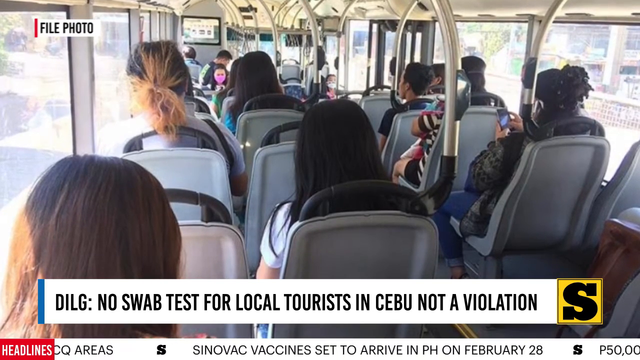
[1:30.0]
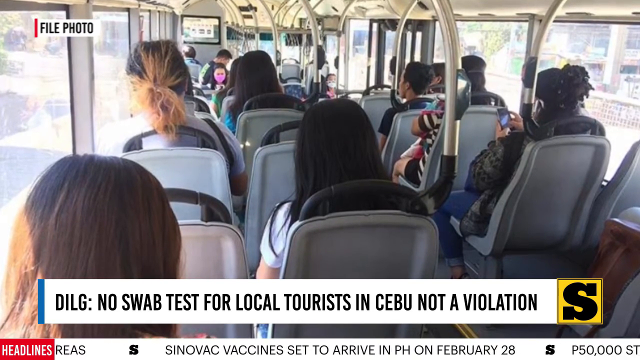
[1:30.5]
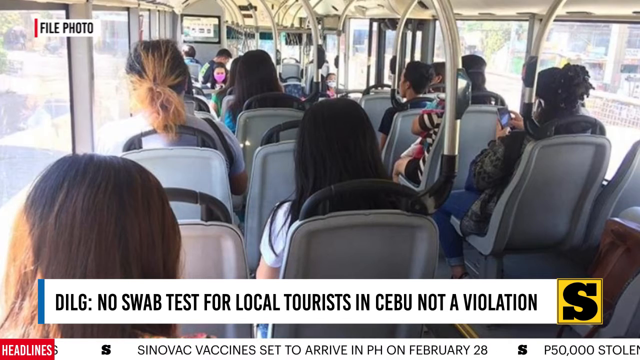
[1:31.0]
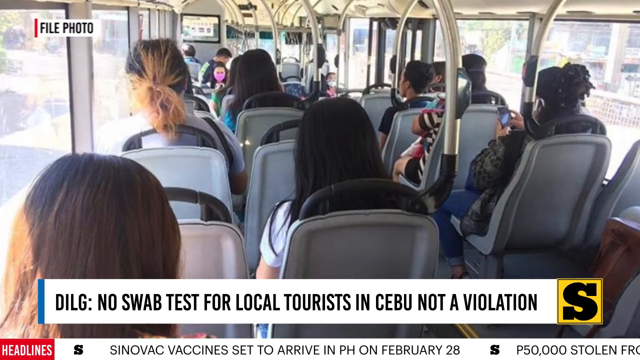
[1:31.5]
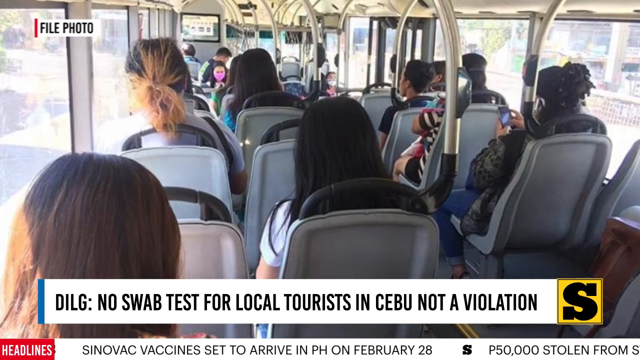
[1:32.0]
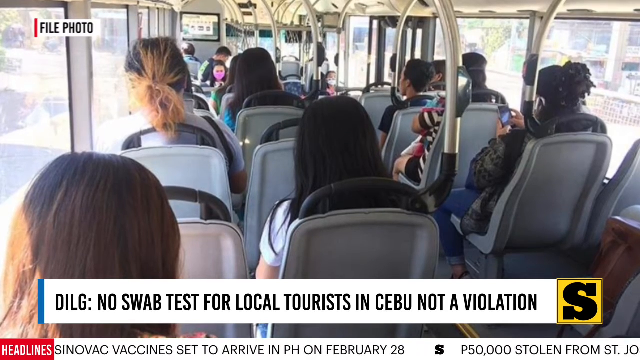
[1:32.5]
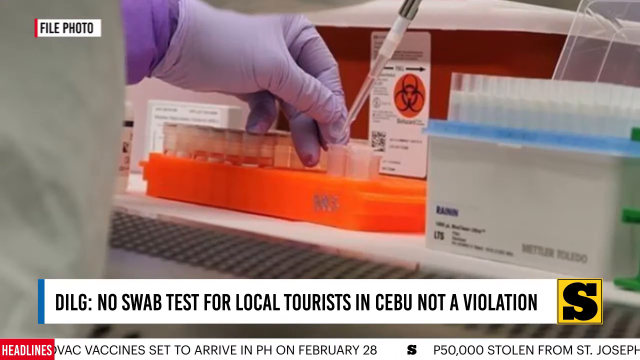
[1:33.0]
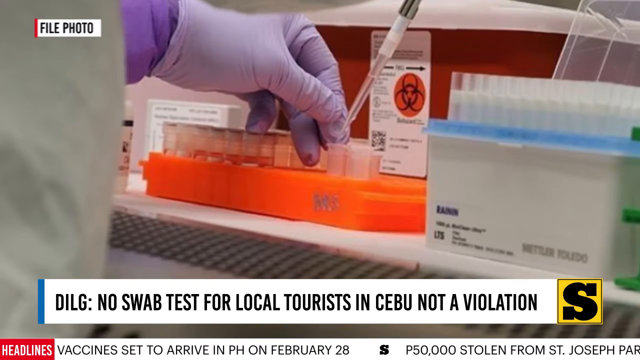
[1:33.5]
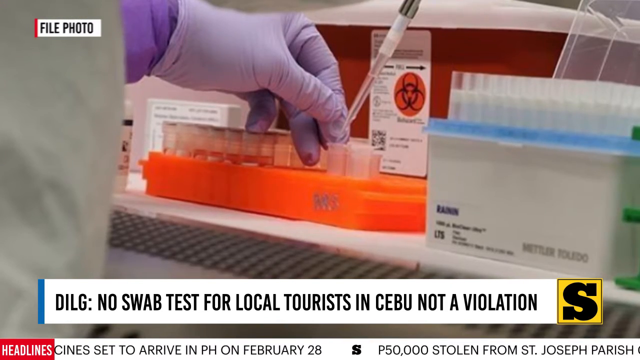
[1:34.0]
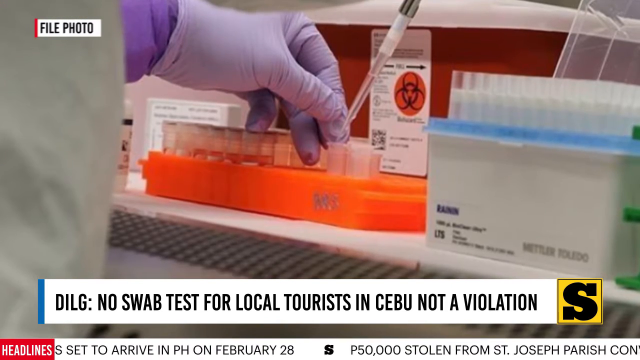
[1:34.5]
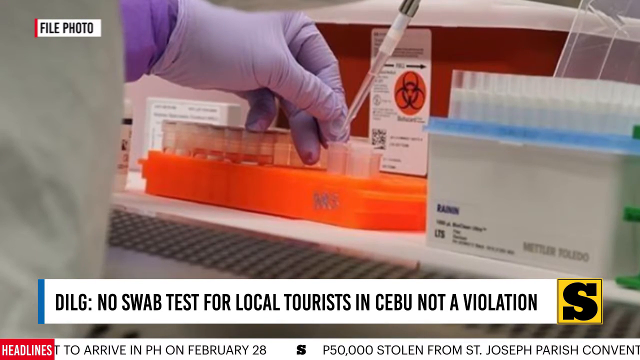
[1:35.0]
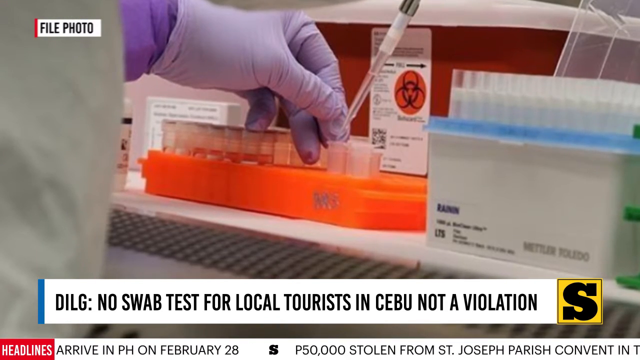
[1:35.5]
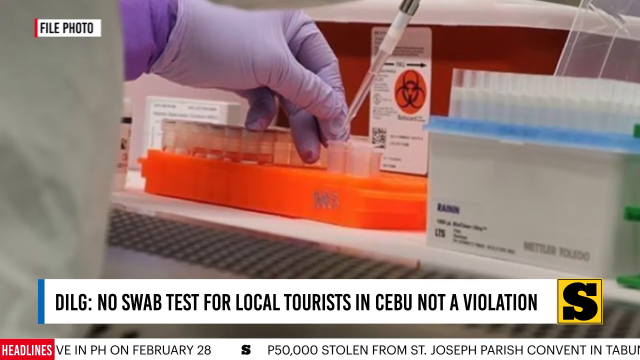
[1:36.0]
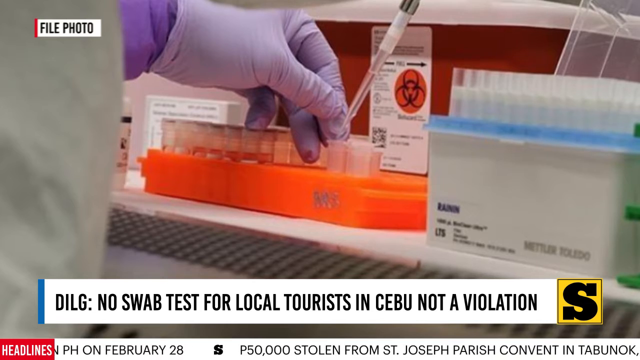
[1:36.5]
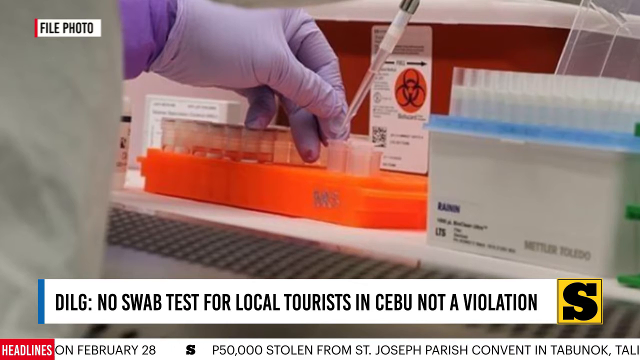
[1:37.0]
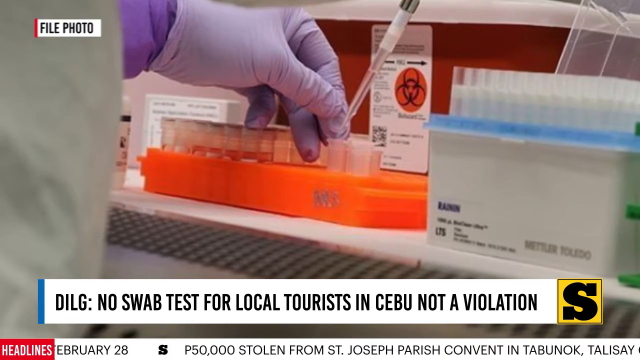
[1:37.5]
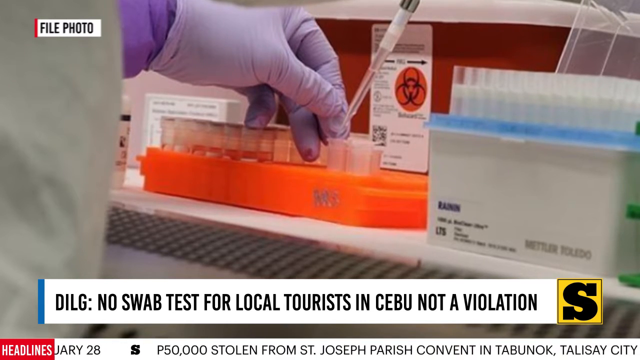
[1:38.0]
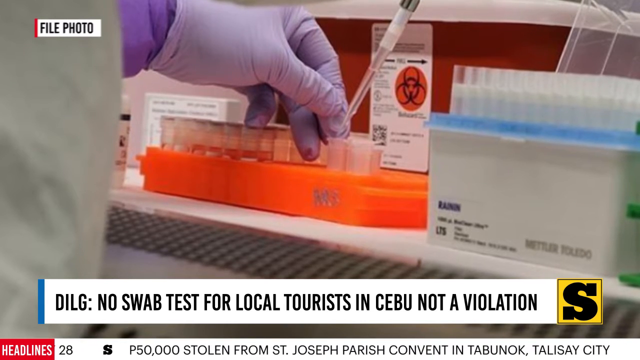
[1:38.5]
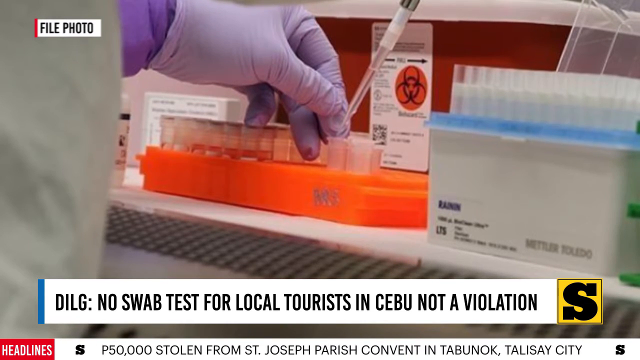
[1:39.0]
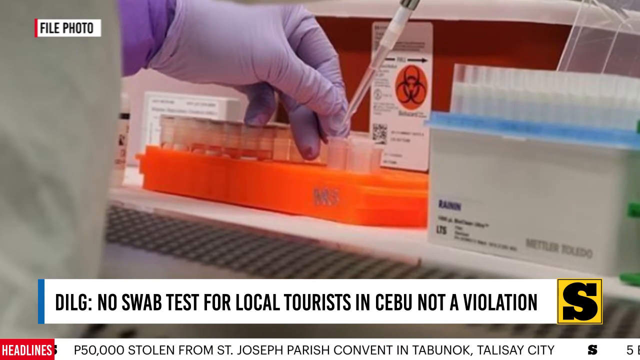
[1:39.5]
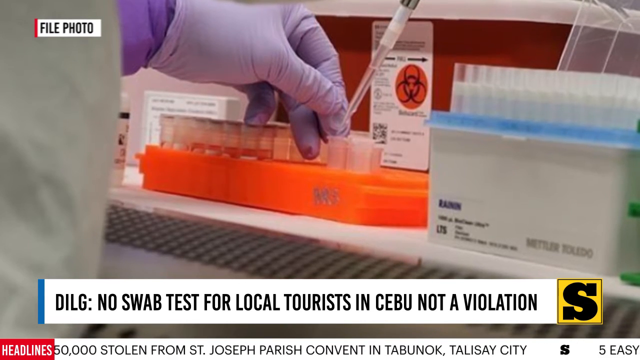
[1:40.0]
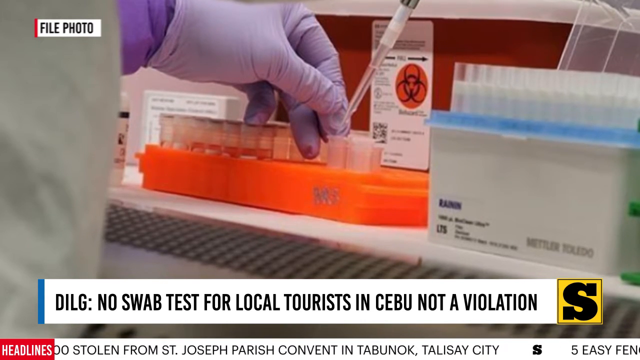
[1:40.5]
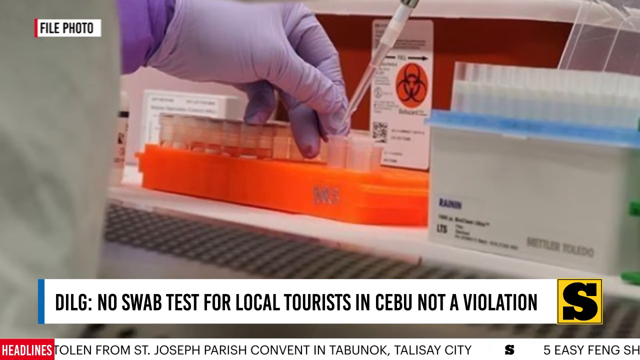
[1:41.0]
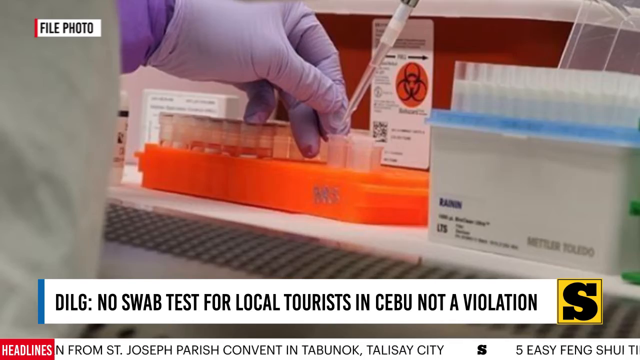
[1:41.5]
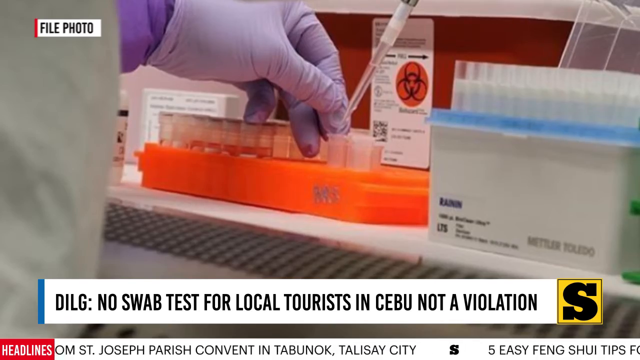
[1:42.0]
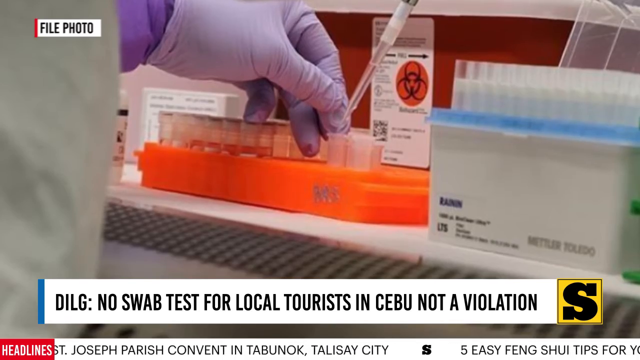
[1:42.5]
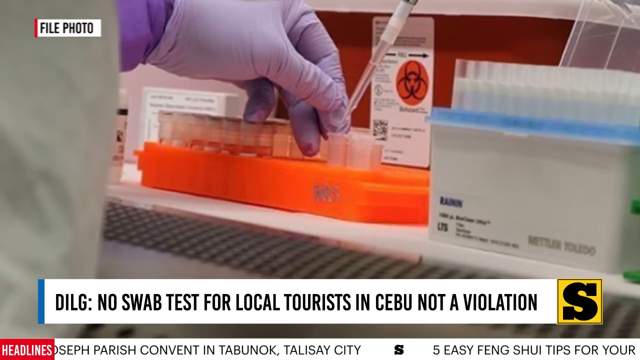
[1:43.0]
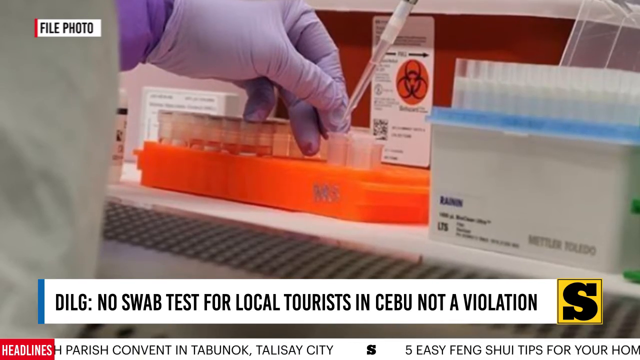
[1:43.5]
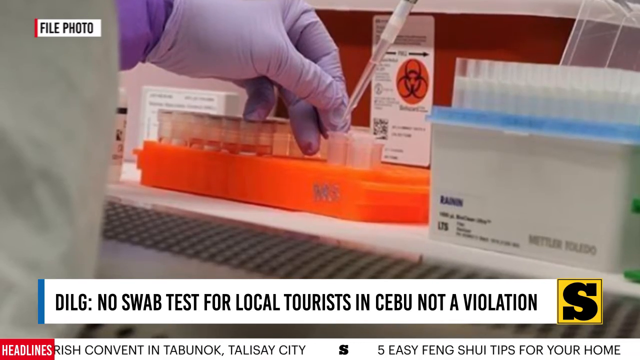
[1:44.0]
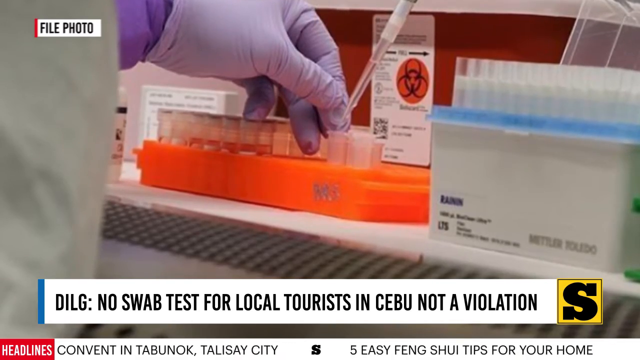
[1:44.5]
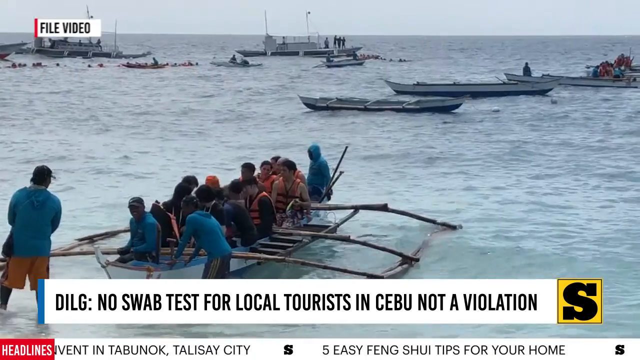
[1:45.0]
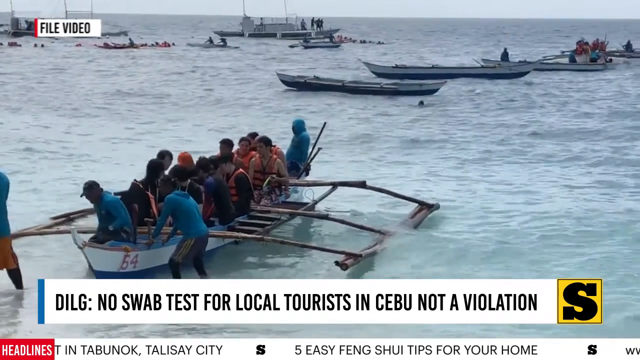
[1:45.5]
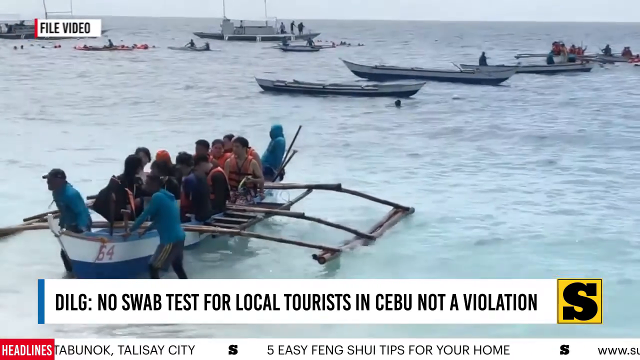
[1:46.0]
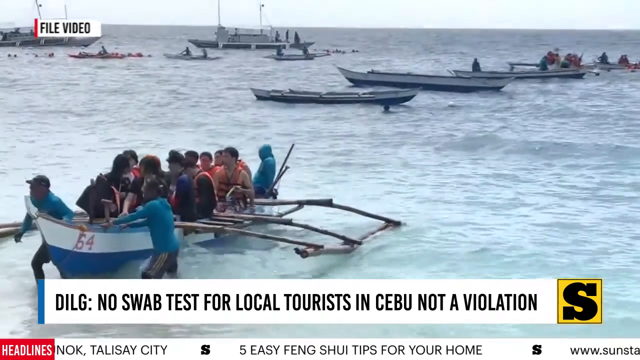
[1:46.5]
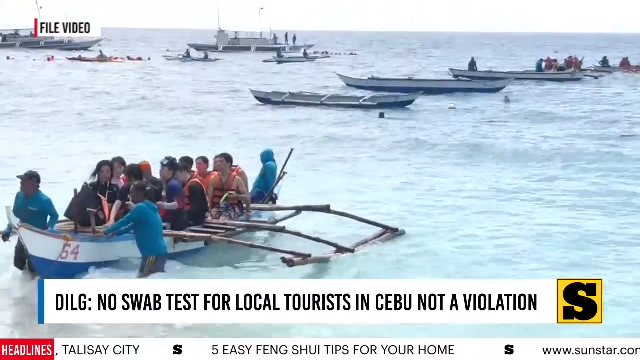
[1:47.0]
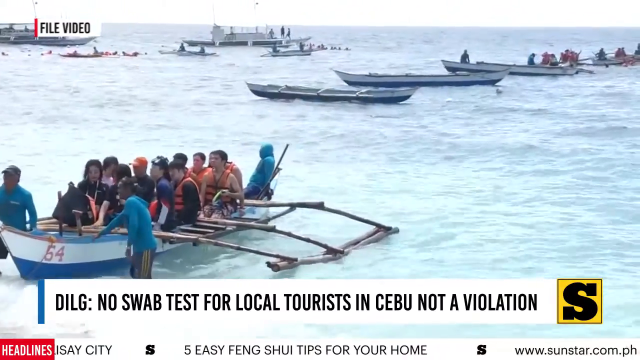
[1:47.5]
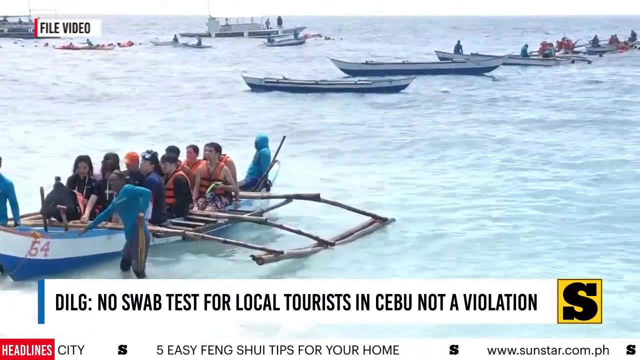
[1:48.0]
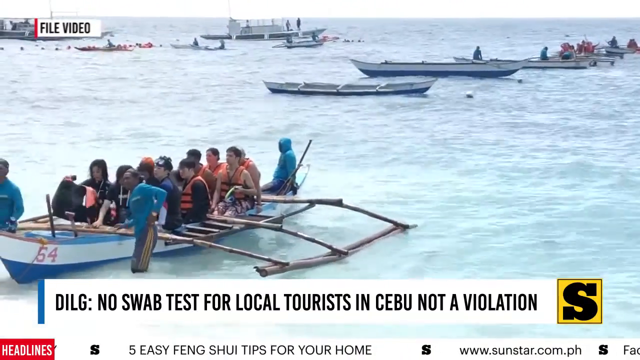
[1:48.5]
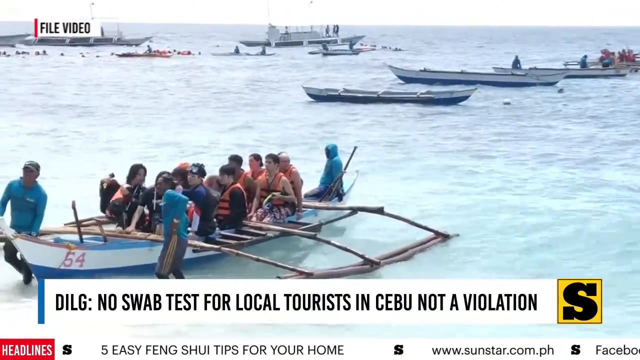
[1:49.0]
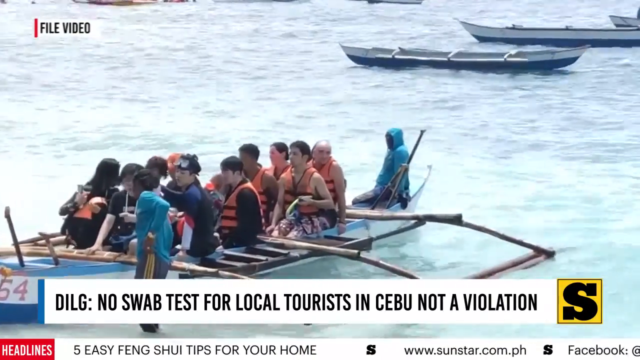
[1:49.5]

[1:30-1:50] A shot inside a bus shows many people. Another scene is a close-up photo of a person wearing purple gloves testing a COVID test, or what appears to be some kind of lab. There is a row of test tubes and a dropper for putting things into them, a white tub with a blue lid and a label on its side that looks like some kind of medical item, and a red tote in the back with a biohazard tag. The person uses the dropper to put liquid into the test tubes, and the picture stays on screen for quite some time. The view then pans to a video of small local boats, maybe six or seven. The first boat holds about 20 people, all wearing orange life vests, along with three helpers in blue uniforms. The boat is stationary, moved gently by the waves. In the back is a row of boats, some empty and some with people in them. The camera zooms in a little. The people in the boat closer to the foreground look like tourists rather than local people, some of European descent and others of East Asian descent, while the workers appear to be local.